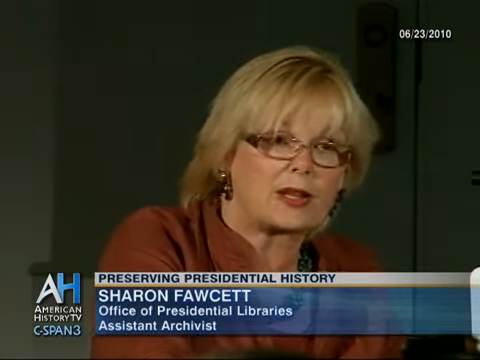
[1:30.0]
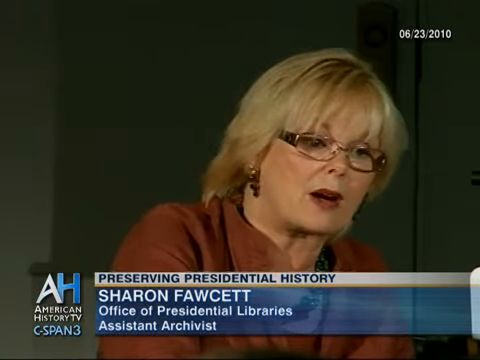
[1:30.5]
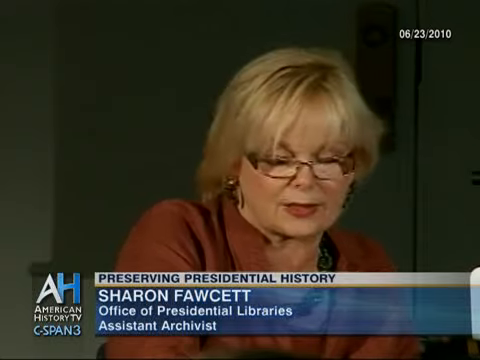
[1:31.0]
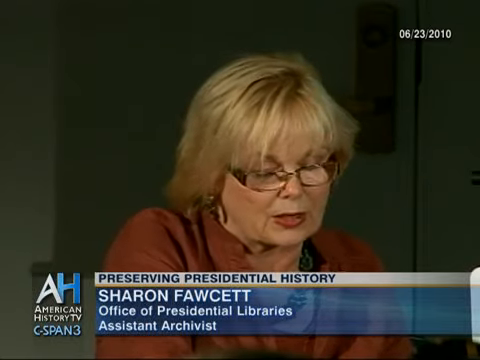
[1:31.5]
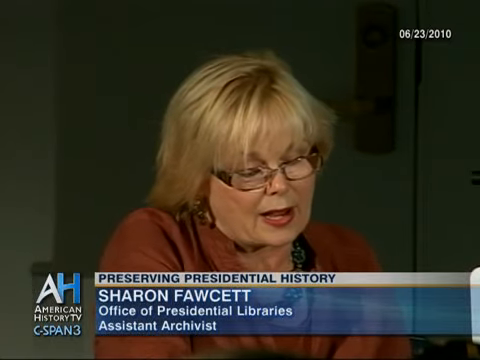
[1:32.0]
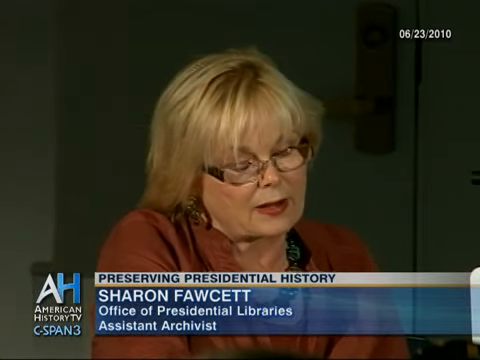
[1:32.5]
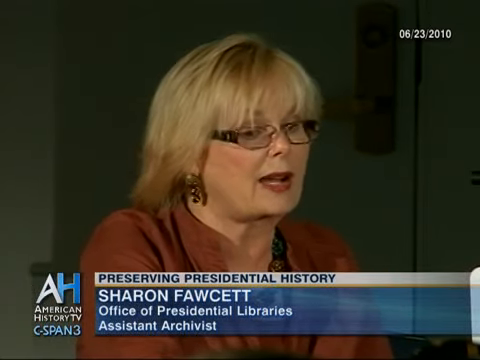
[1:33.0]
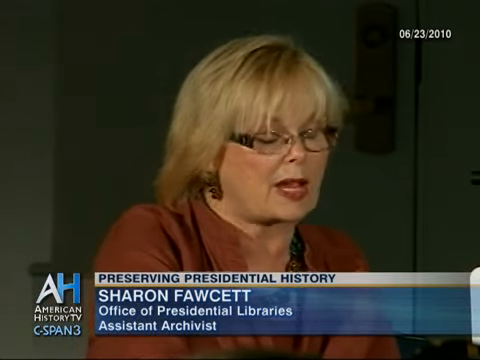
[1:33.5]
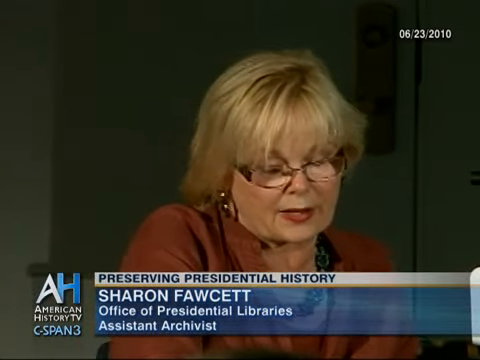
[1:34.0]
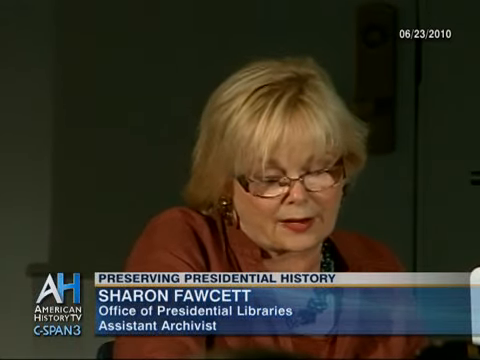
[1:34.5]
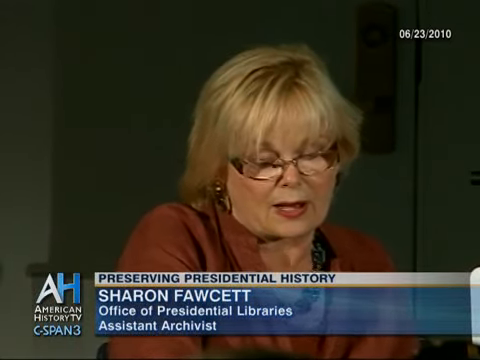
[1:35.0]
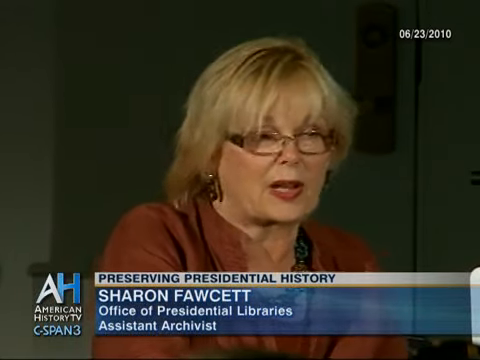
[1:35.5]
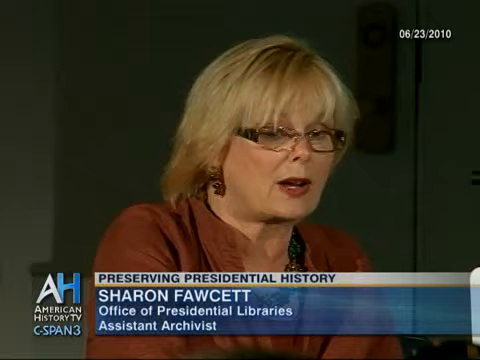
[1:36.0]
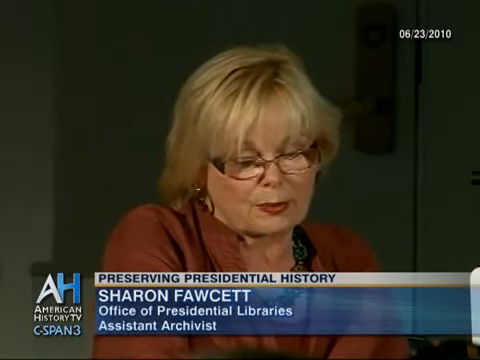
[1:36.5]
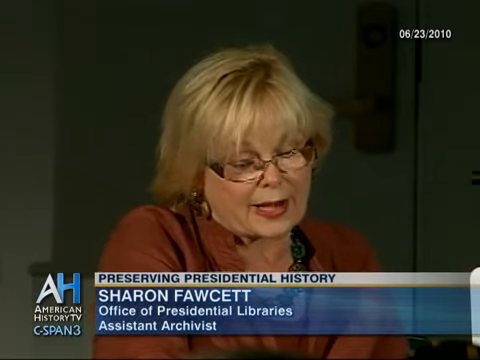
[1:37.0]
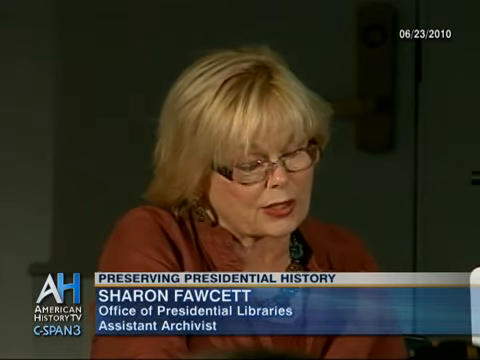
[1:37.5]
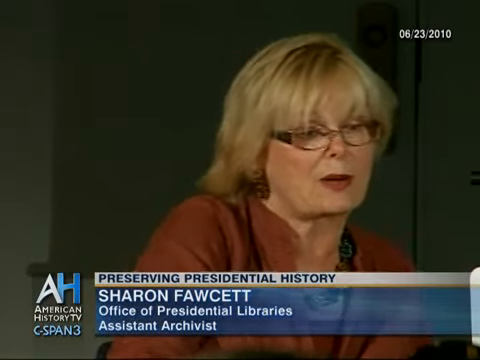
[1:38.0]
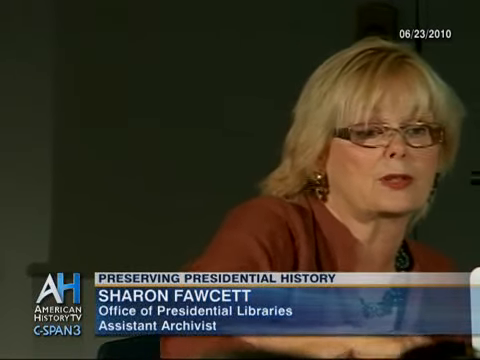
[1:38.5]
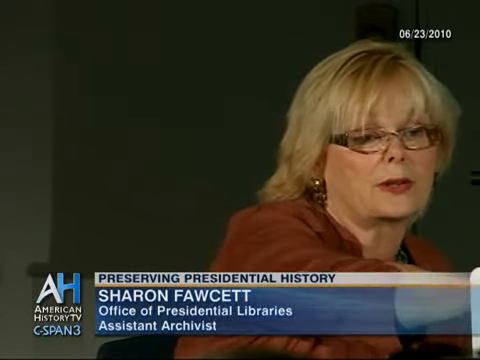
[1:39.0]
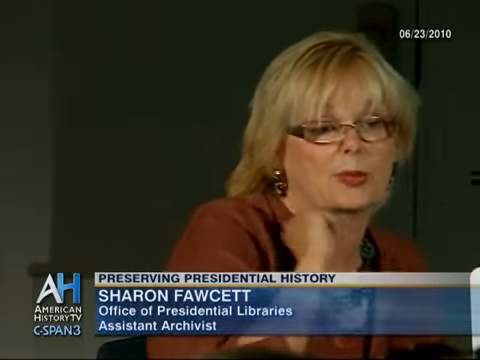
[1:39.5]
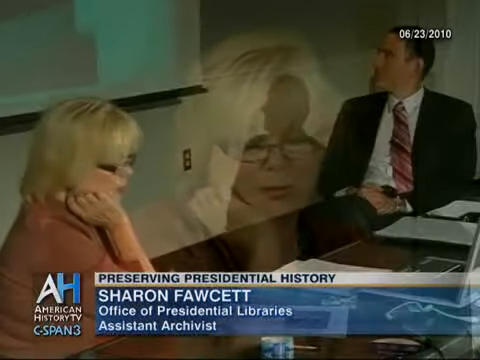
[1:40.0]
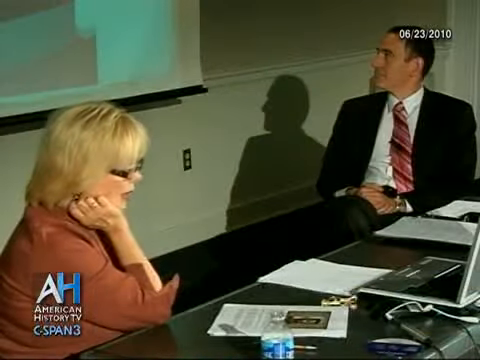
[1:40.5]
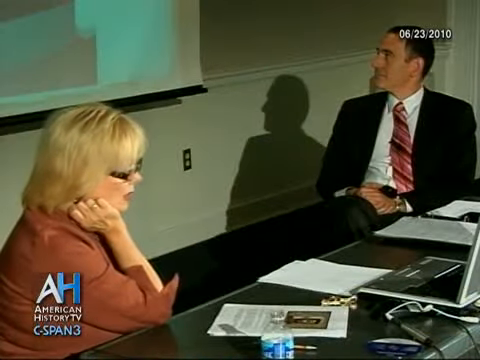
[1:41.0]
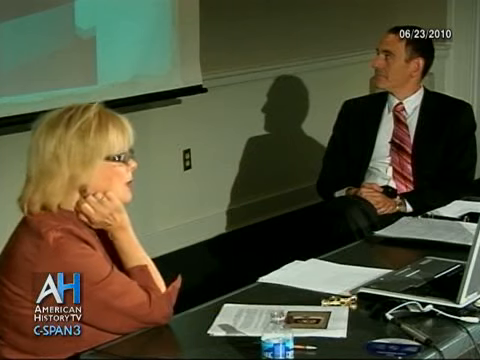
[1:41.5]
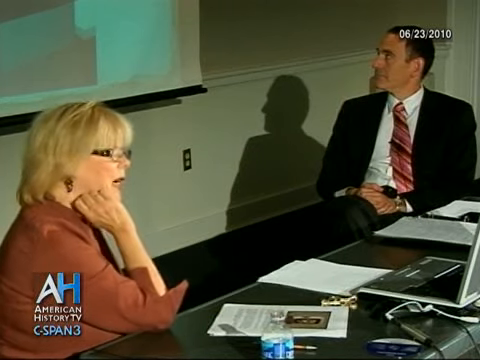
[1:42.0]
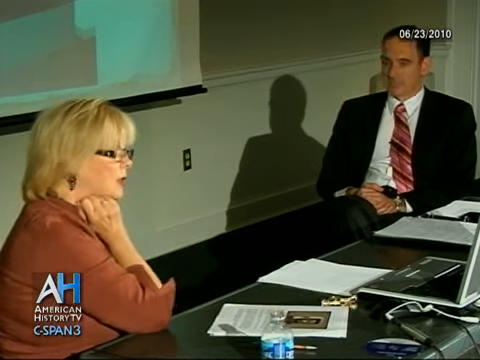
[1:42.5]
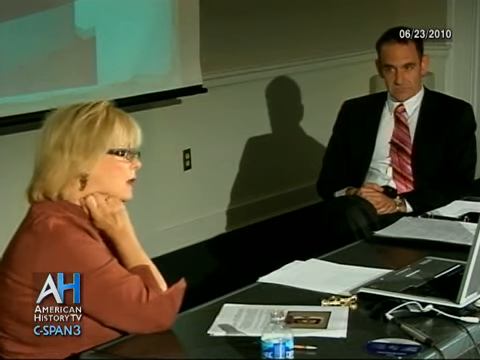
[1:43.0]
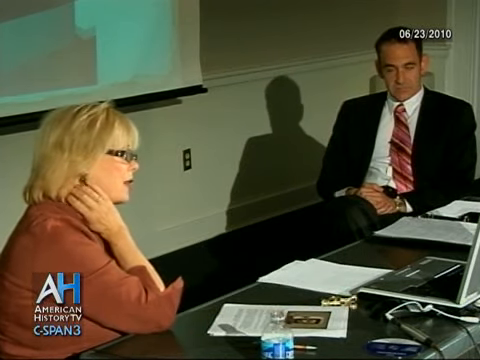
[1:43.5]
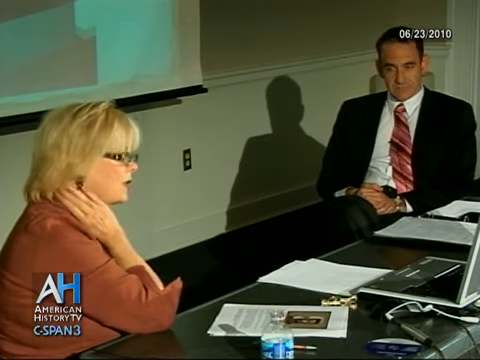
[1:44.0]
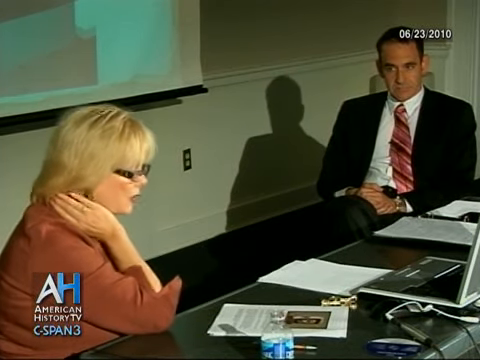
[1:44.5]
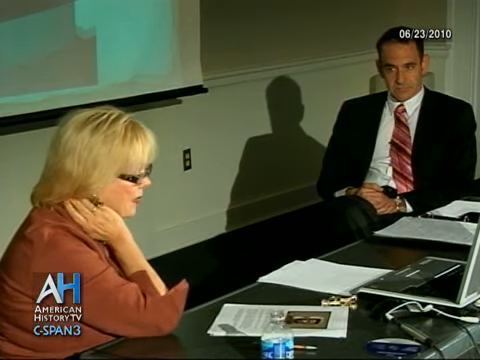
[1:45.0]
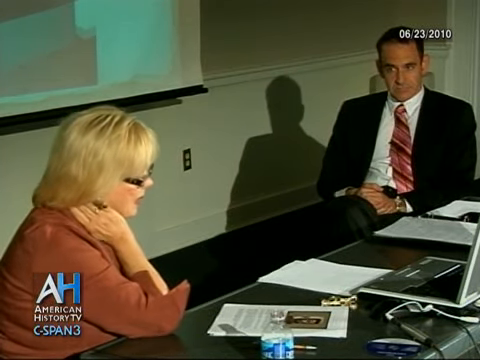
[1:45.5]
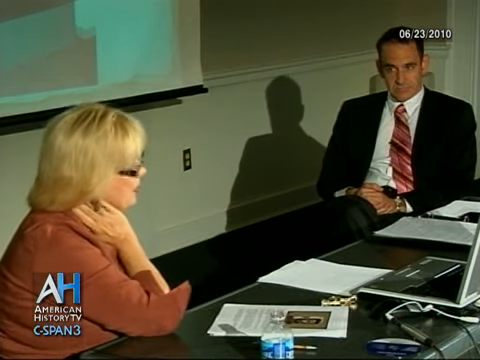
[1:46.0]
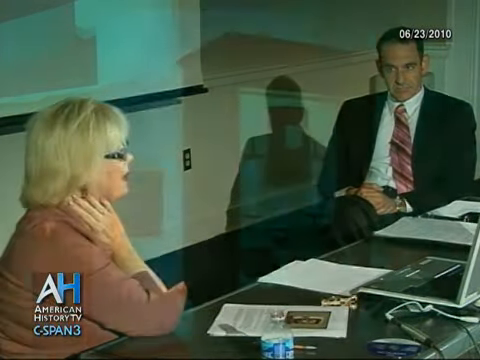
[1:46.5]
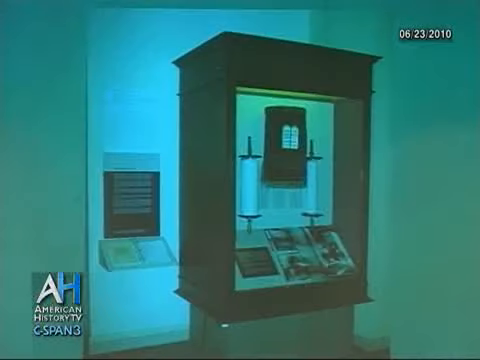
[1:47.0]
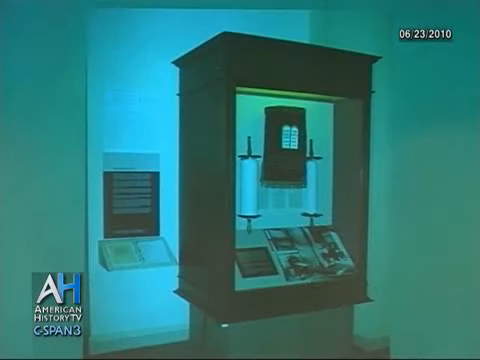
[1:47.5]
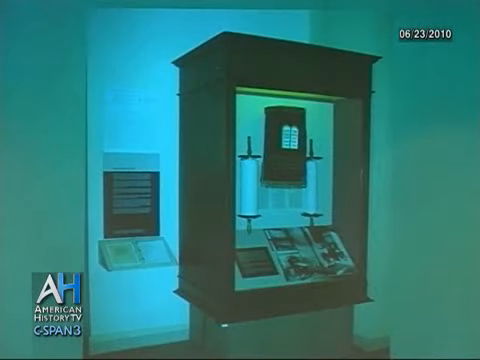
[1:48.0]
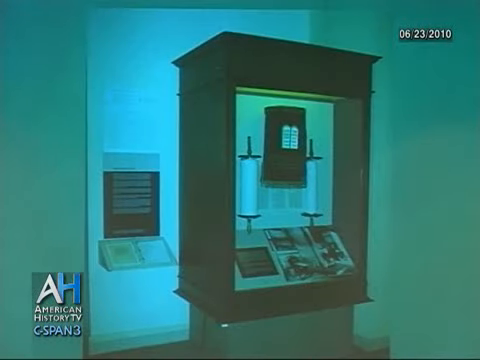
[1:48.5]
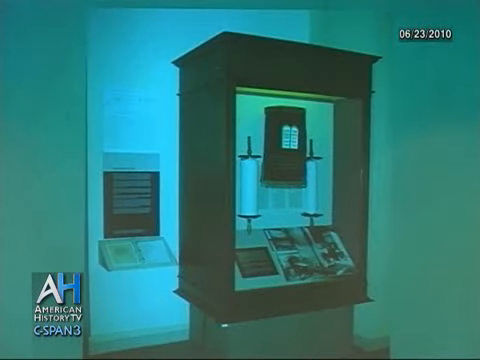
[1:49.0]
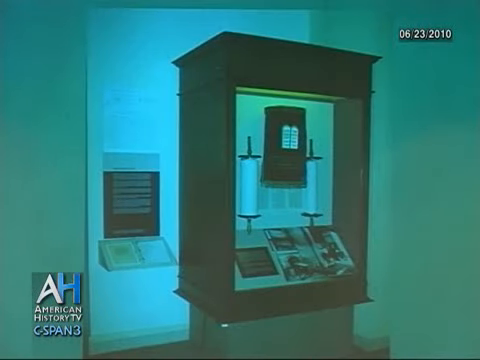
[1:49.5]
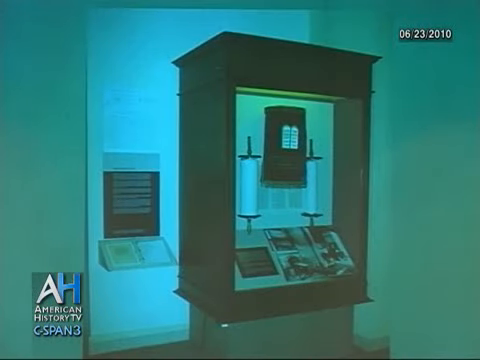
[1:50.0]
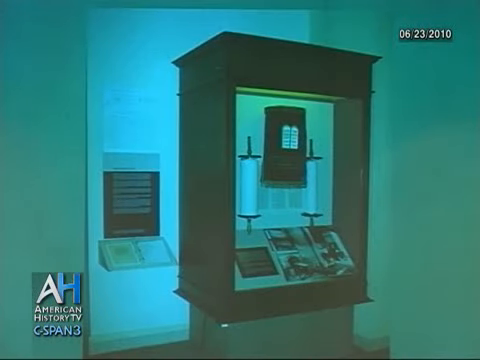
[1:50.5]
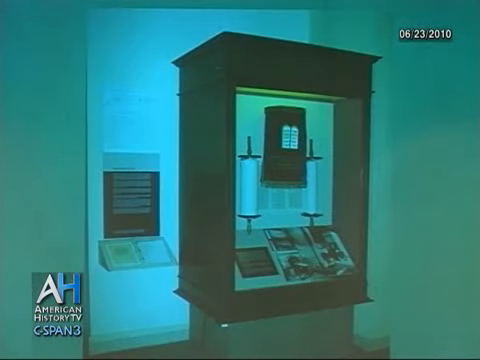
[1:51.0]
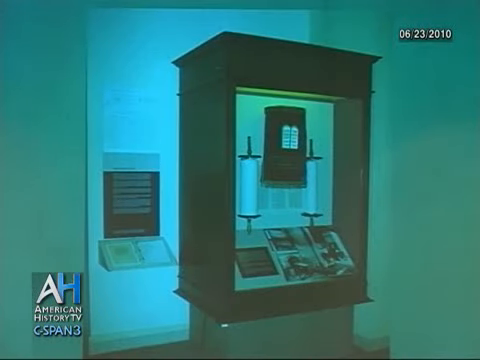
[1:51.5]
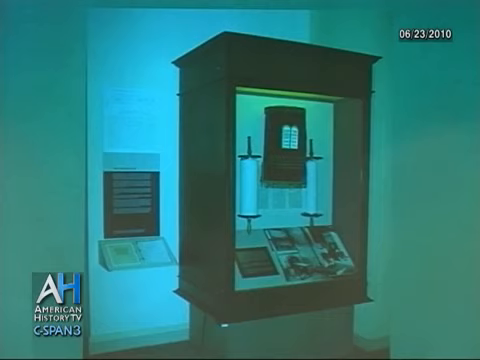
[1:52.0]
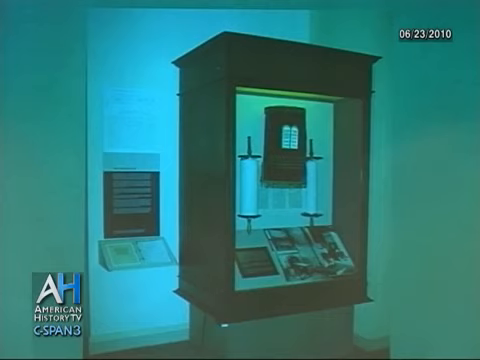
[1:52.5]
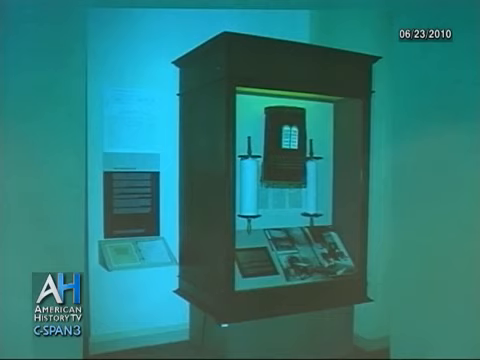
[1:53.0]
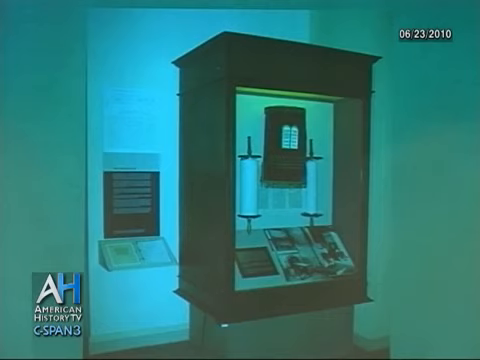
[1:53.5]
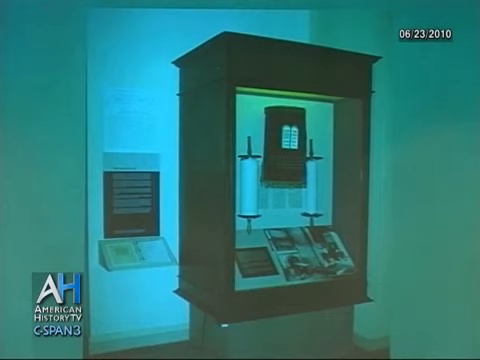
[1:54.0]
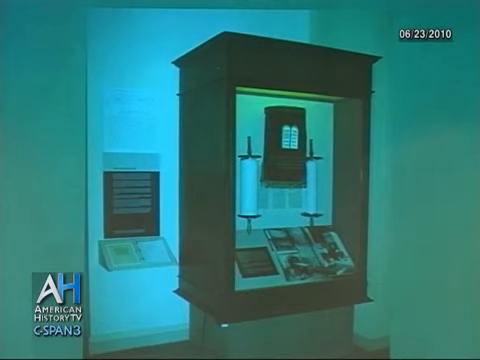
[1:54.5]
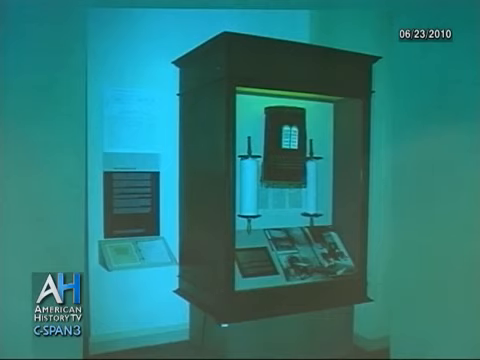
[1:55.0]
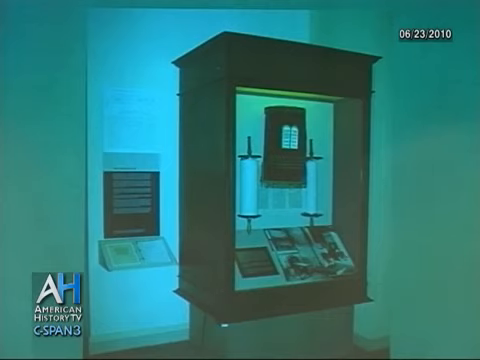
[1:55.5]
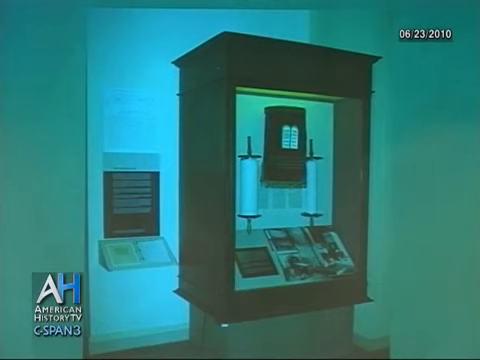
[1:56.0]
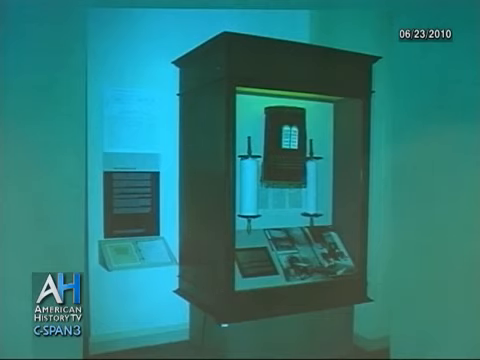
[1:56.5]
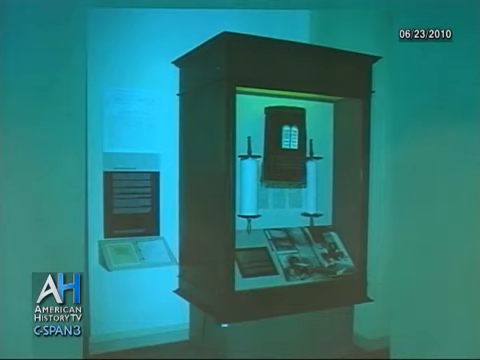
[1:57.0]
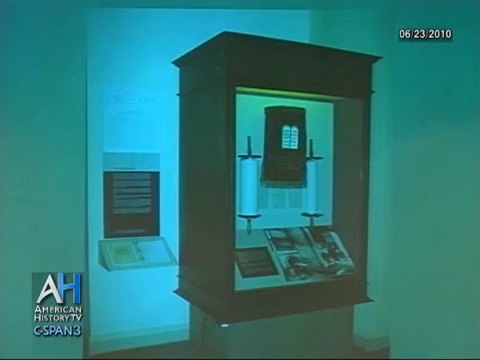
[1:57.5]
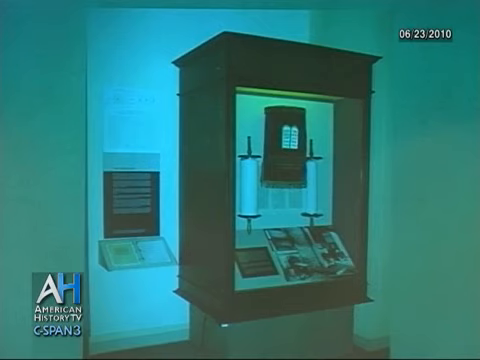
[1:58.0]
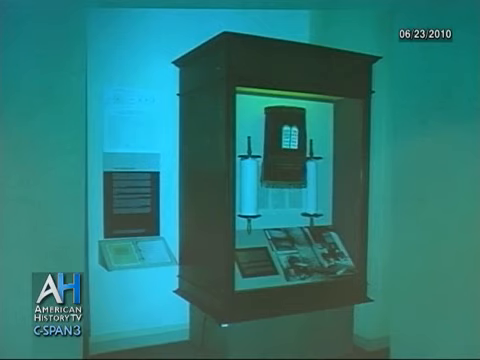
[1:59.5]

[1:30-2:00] The closer angle on the woman continues, showing her from about mid-torso up. She looks more or less toward the camera without making eye contact, and her lips keep moving as she talks. At times she looks down, at times up, and she leans a little to her left. The video cuts back to the original two-shot of her and the man at the other end of the table, who for a moment looks to his right at the projector screen; only the bottom of the screen is visible, so what it says cannot be seen. He then turns his head to the left and looks at her. Next comes a cut to a different image that looks like a museum display, perhaps from the Roosevelt Library. It is a kind of wooden box of fairly decent size, and inside it are a couple of scrolls pointing upward. Paper runs against the back wall between the two scrolls, and below there is something that almost looks like newspaper; it is hard to see because the view is far away. Behind the box there appear to be other papers displayed against the wall.